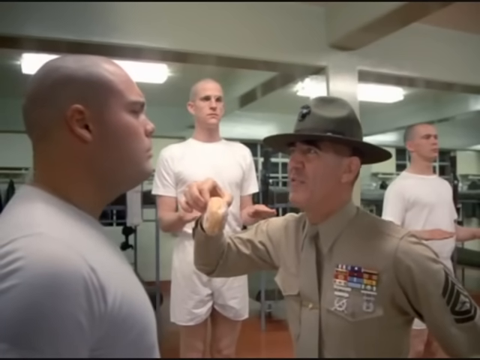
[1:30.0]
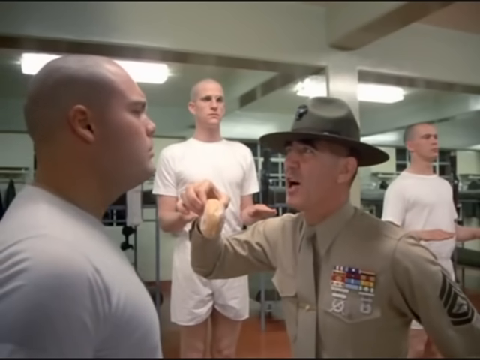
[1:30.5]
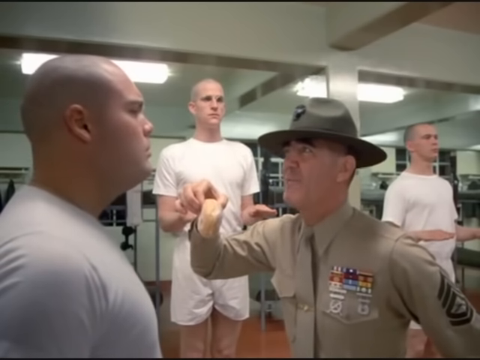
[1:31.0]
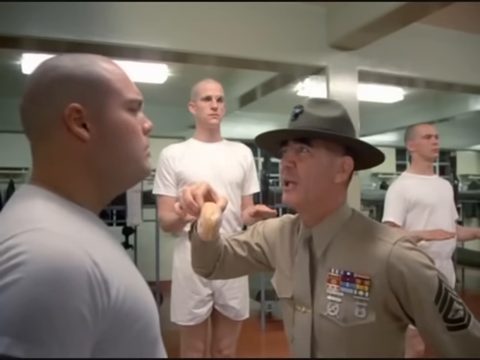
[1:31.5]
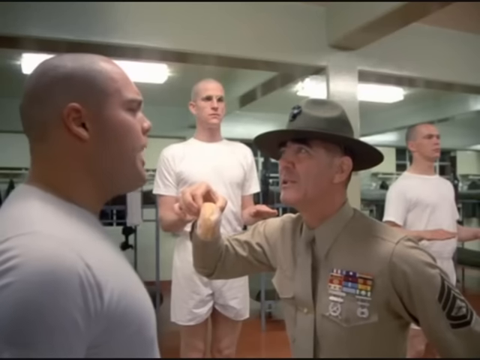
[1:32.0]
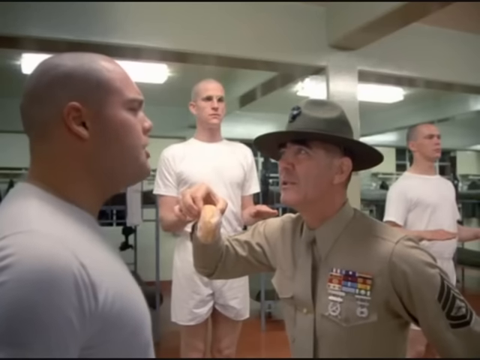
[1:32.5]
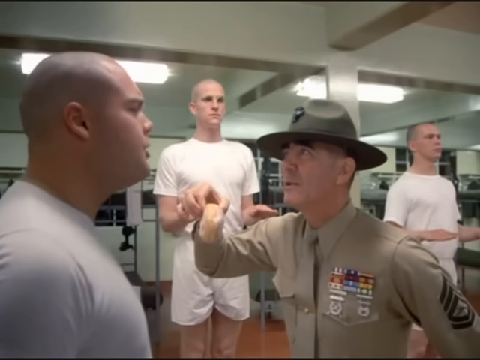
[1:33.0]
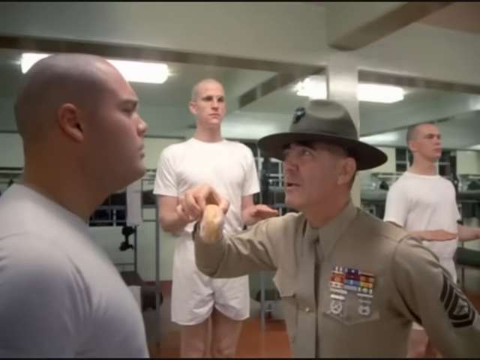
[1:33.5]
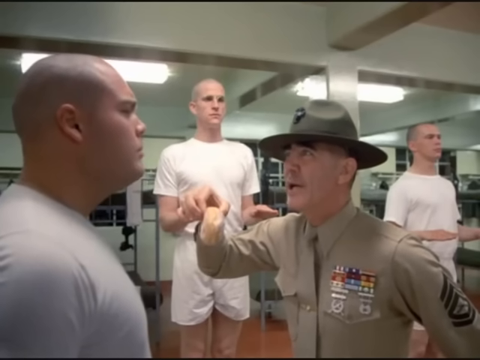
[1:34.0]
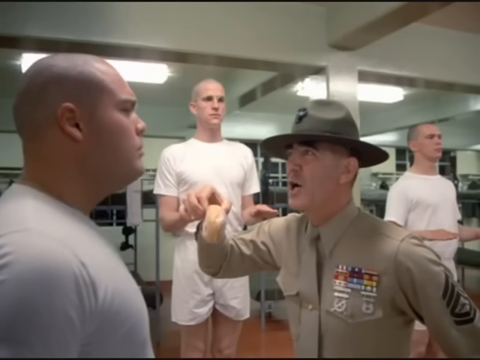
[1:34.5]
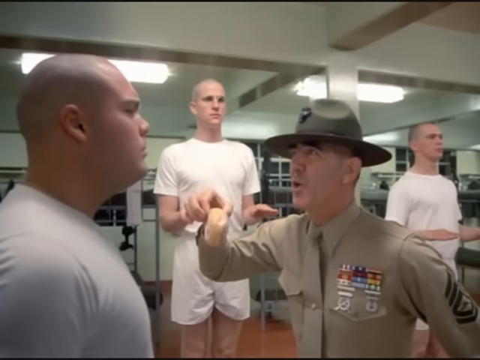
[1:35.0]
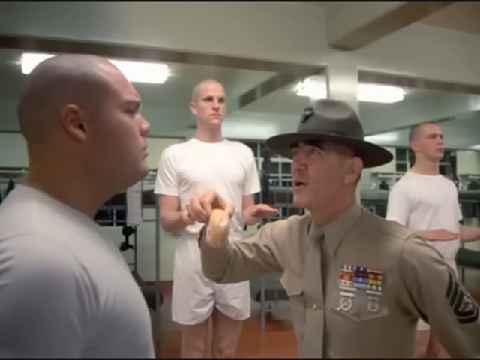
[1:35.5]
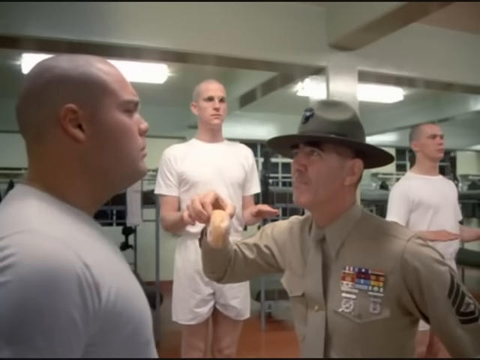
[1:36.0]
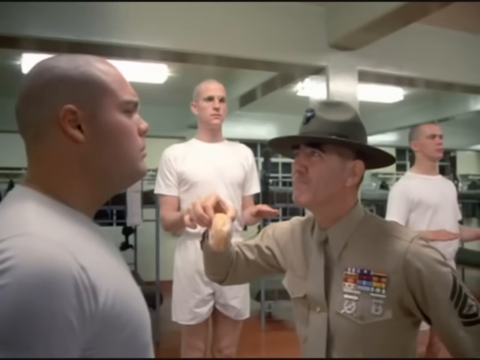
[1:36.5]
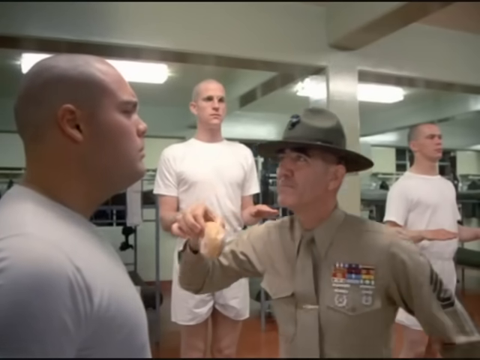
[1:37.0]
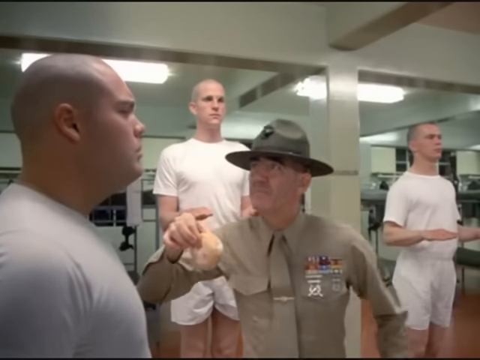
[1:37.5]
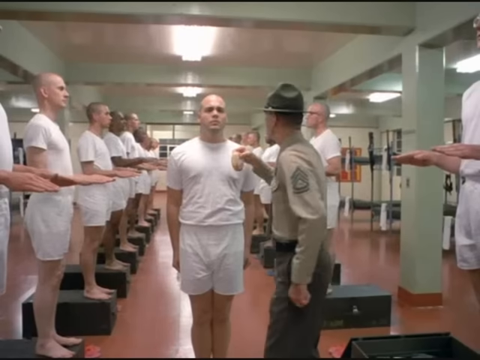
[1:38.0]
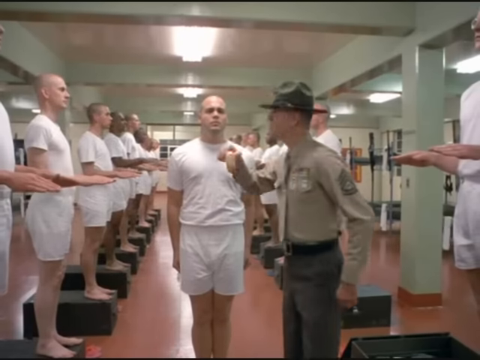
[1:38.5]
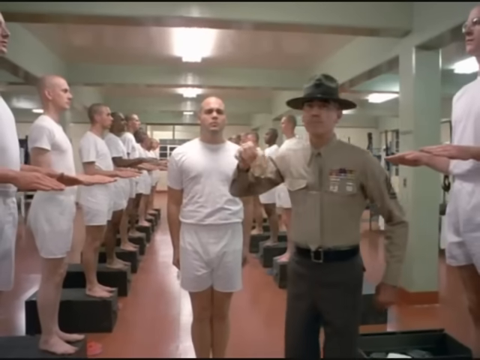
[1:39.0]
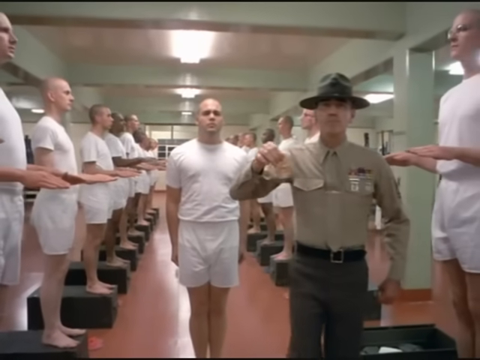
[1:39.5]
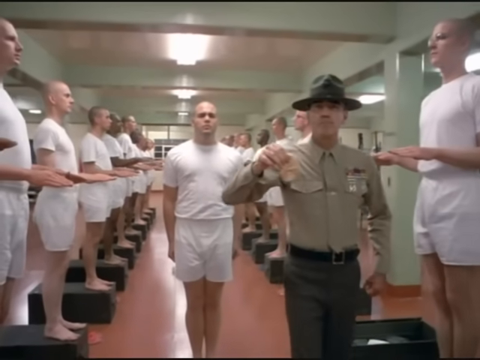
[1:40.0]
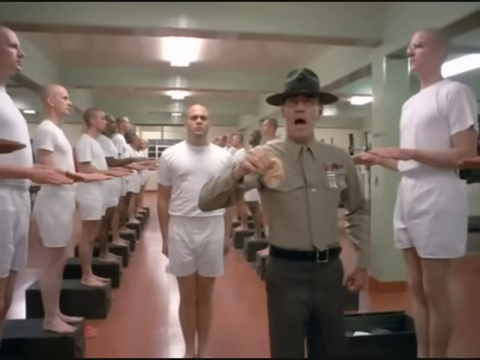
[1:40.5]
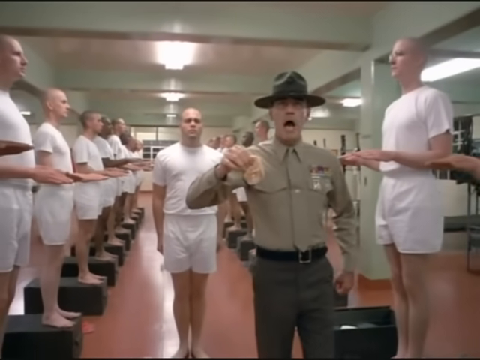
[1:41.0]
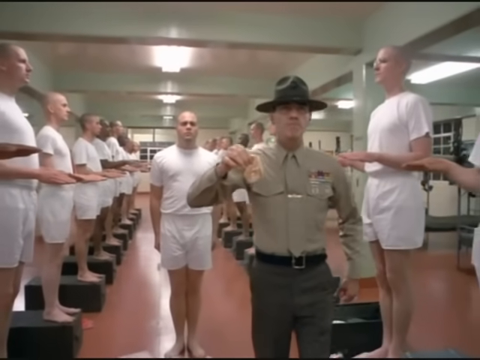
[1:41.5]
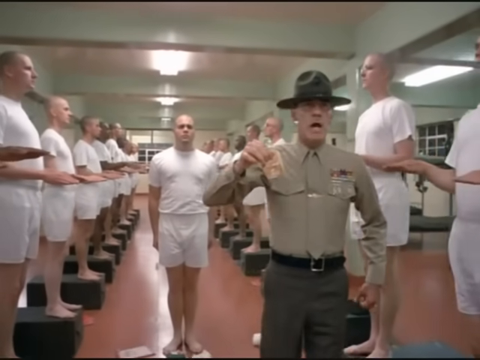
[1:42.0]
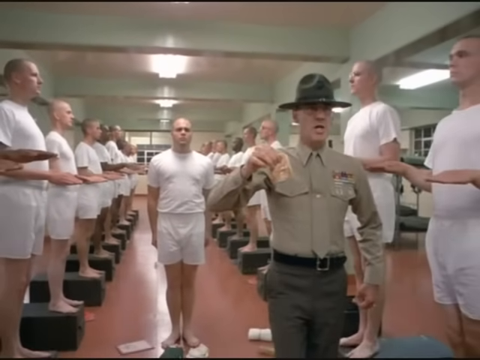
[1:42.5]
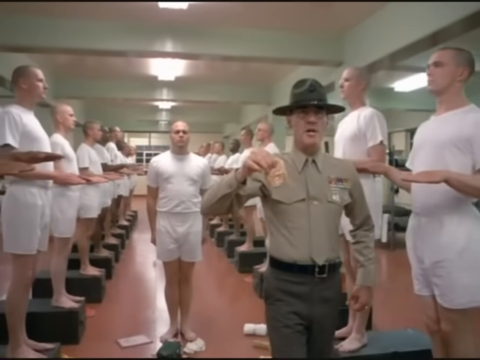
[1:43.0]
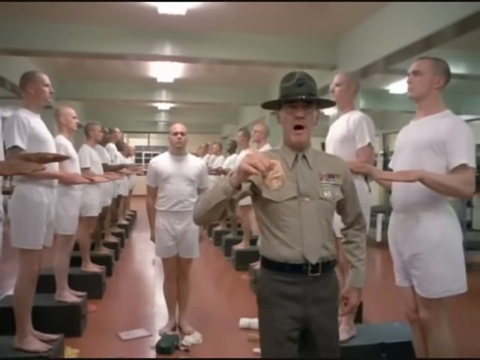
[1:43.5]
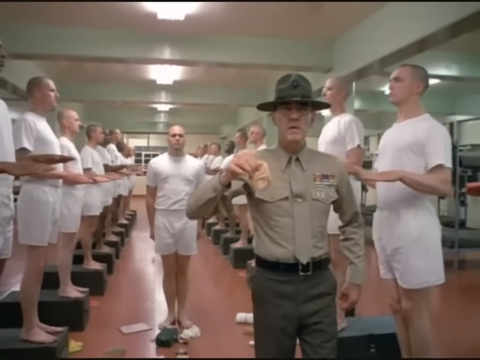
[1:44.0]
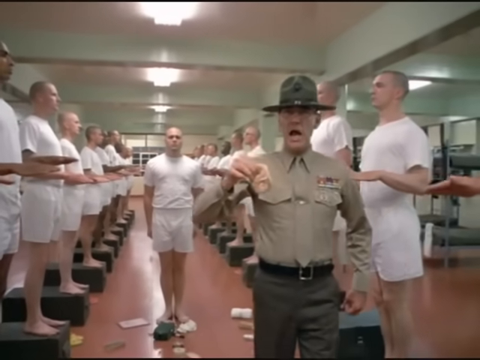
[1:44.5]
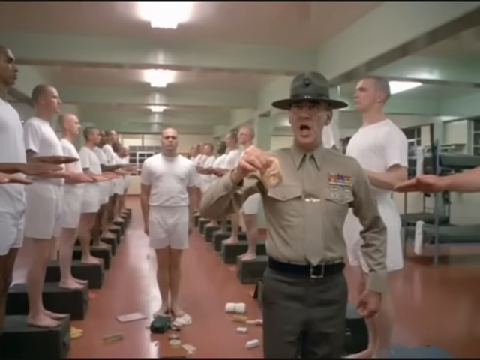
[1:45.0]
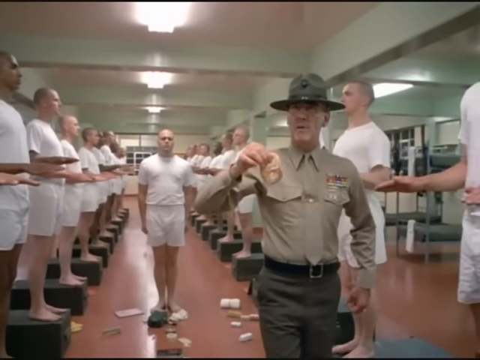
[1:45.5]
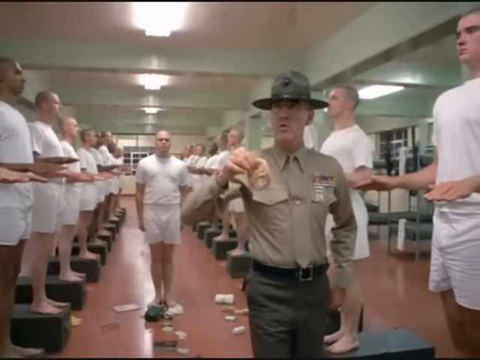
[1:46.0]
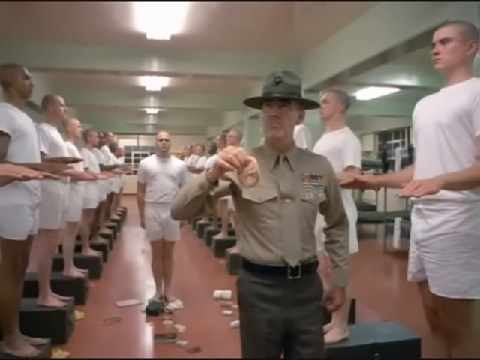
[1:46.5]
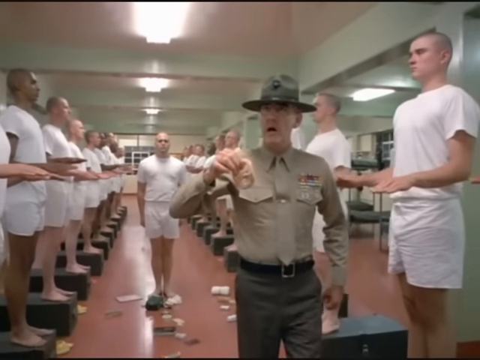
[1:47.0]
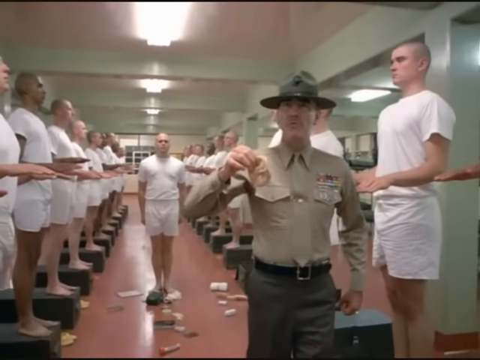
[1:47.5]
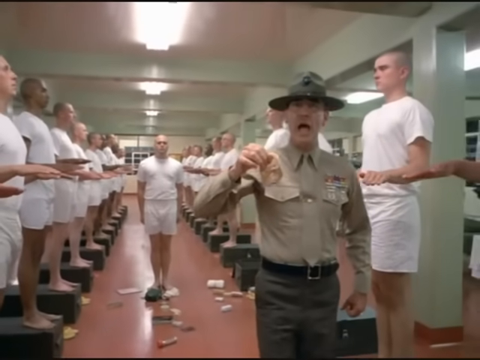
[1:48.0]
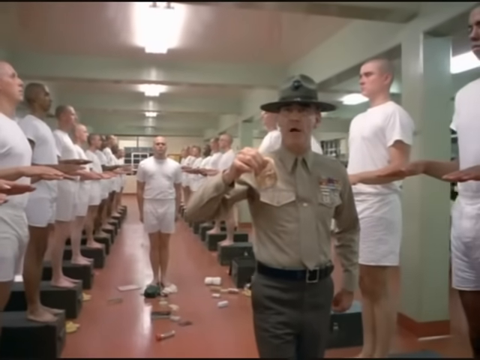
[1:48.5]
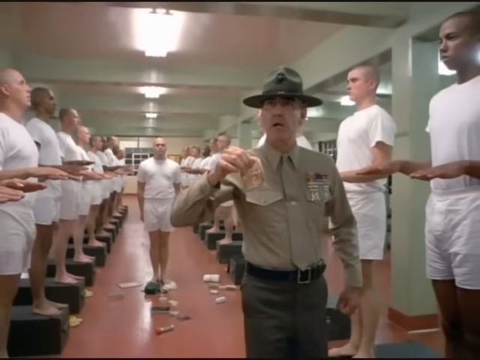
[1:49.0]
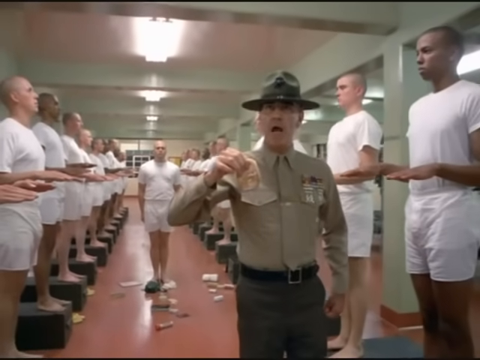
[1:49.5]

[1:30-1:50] A drill sergeant holds a donut, gripping it with his index finger and thumb, his elbow bent as he holds it to a trainee's face. Other trainees are visible standing on top of foot lockers with their elbows bent, palms facing the ground and fingers outstretched. The drill sergeant shouts at the trainee, who responds. The drill sergeant says a few words, then turns around, still holding the donut the same way, and starts shouting at the room. He walks slowly down the aisle with the trainees standing on their footlockers on either side of him, marching slowly and shouting, the donut gripped in one hand and his other fist held at his side. The trainees stand on their foot lockers unmoving.